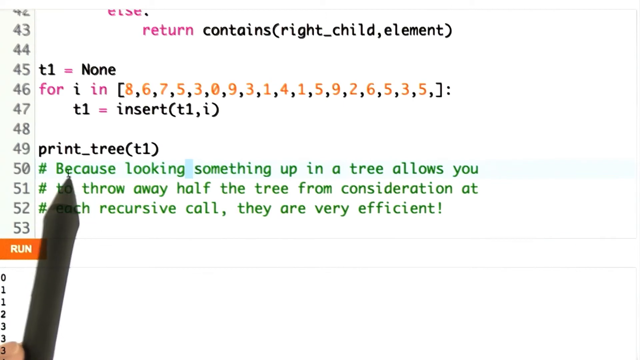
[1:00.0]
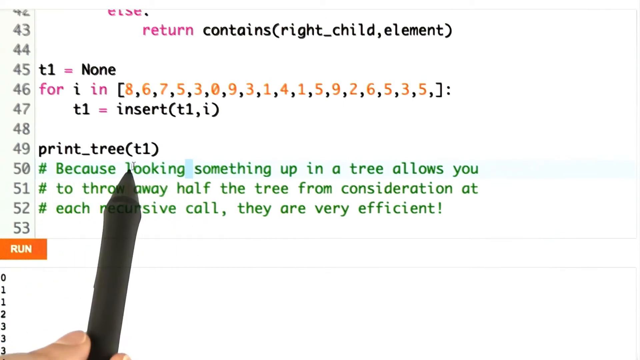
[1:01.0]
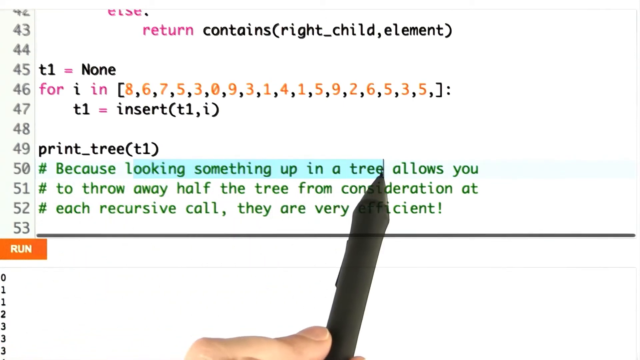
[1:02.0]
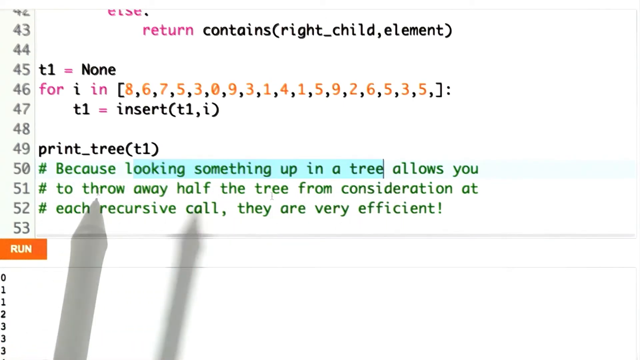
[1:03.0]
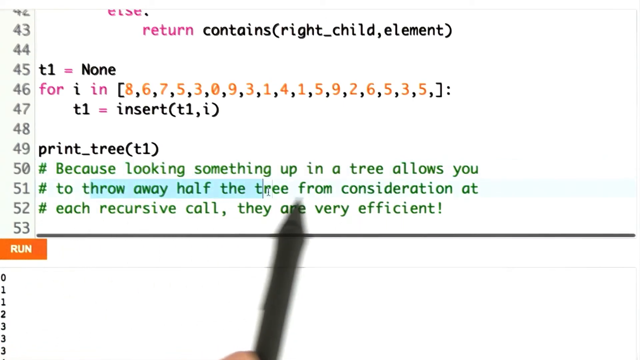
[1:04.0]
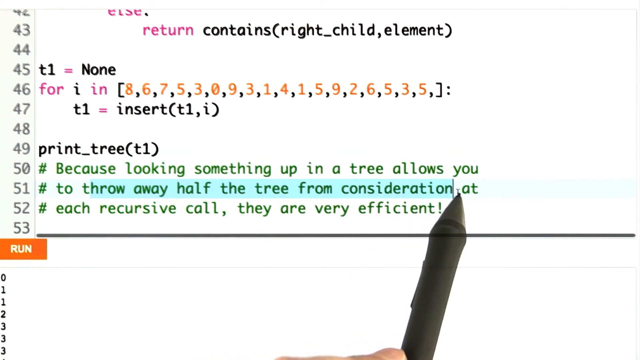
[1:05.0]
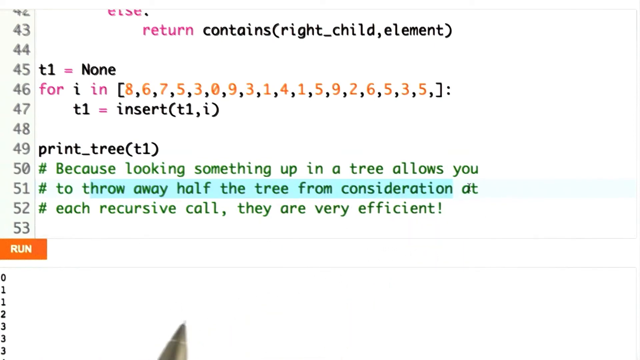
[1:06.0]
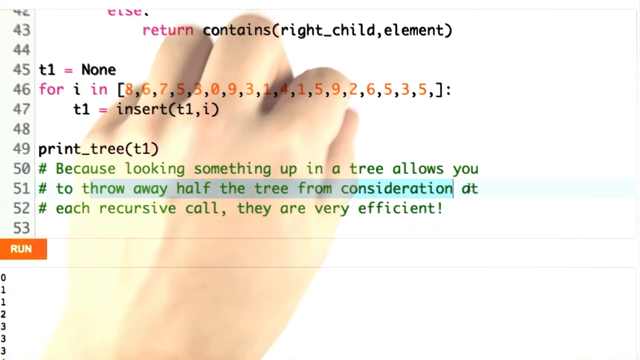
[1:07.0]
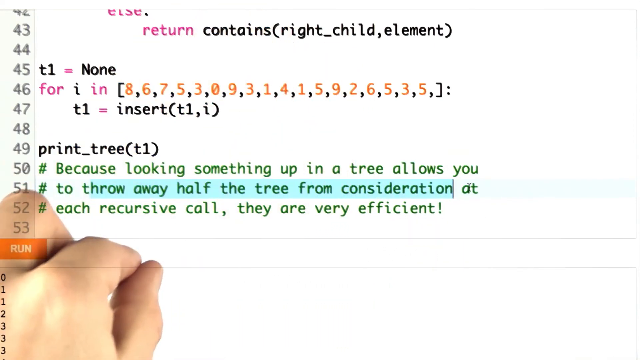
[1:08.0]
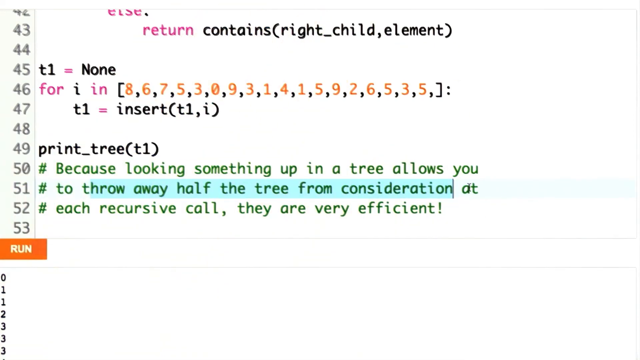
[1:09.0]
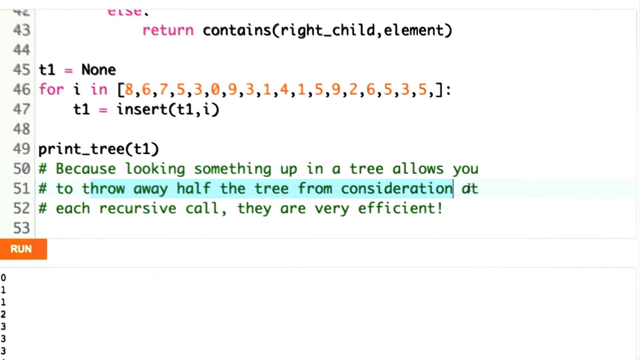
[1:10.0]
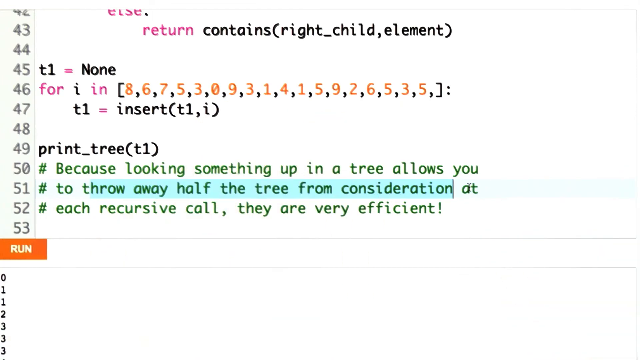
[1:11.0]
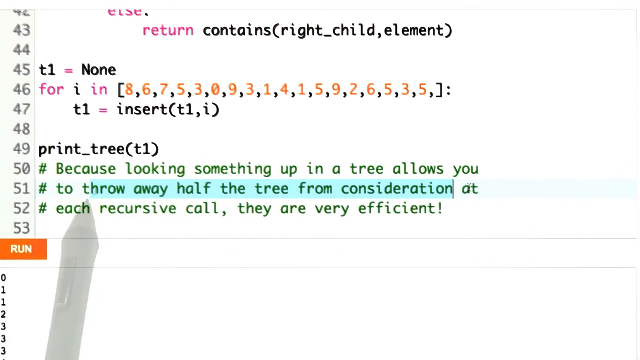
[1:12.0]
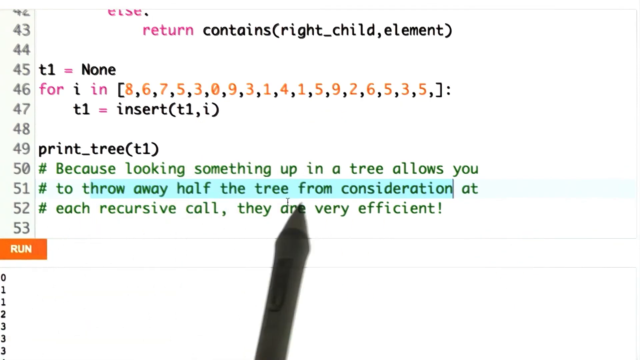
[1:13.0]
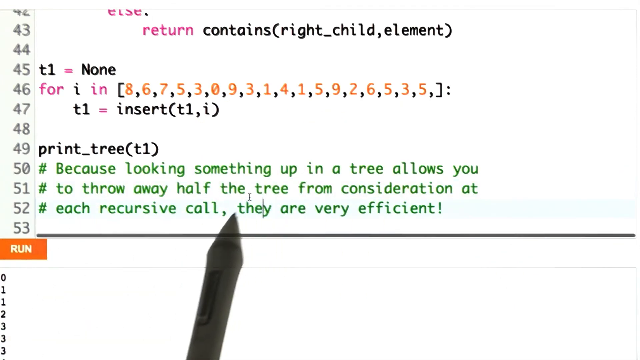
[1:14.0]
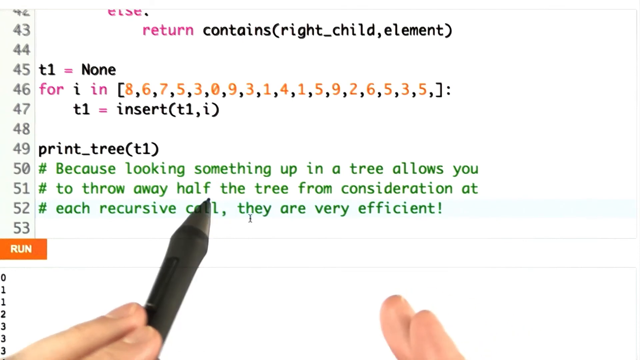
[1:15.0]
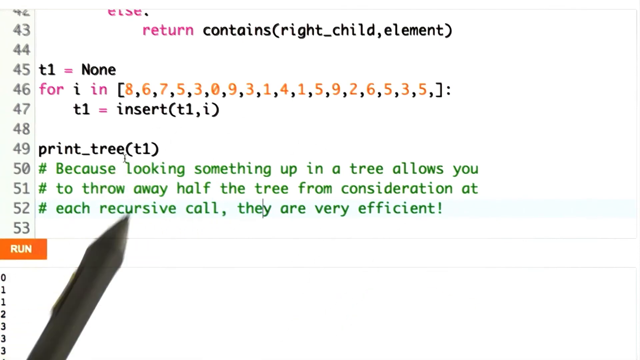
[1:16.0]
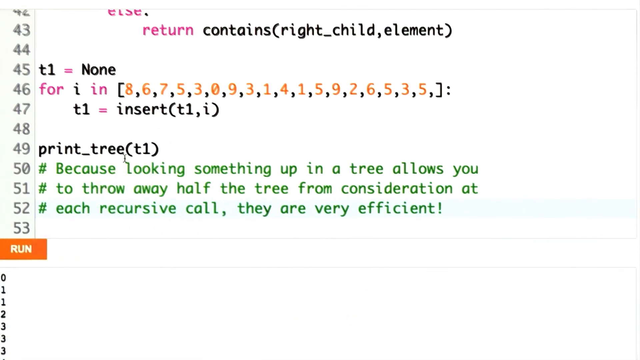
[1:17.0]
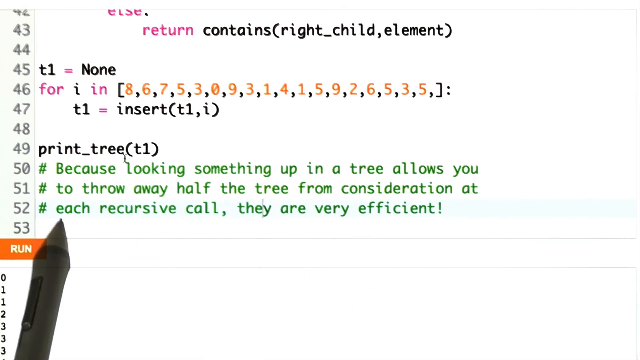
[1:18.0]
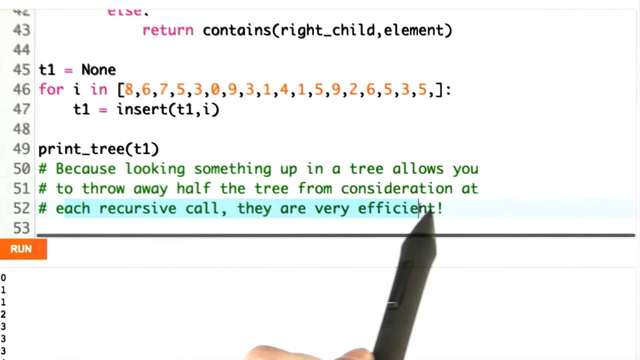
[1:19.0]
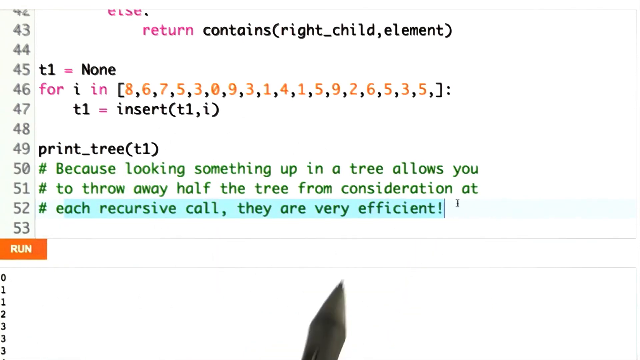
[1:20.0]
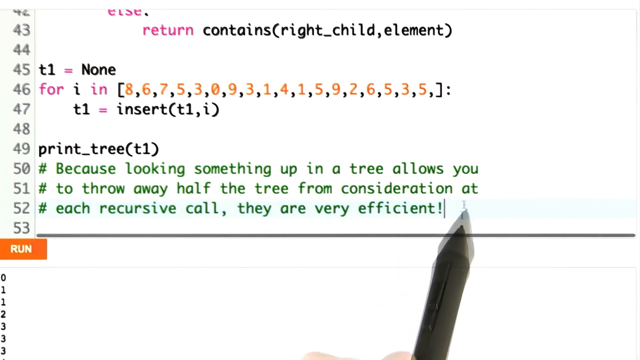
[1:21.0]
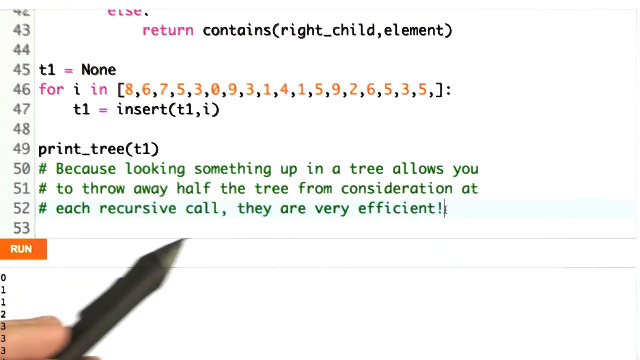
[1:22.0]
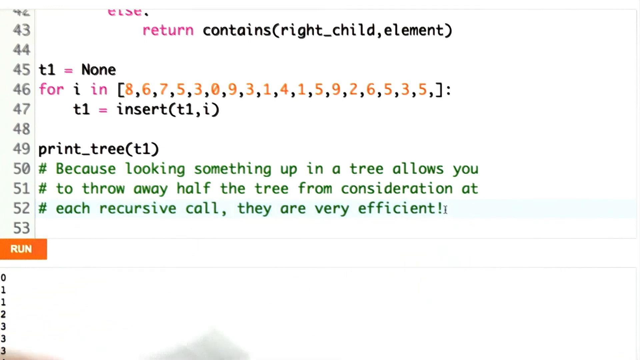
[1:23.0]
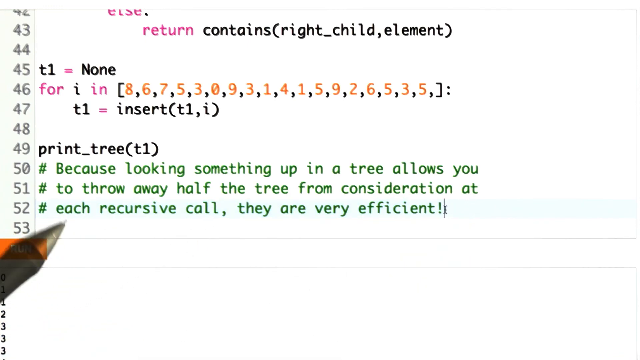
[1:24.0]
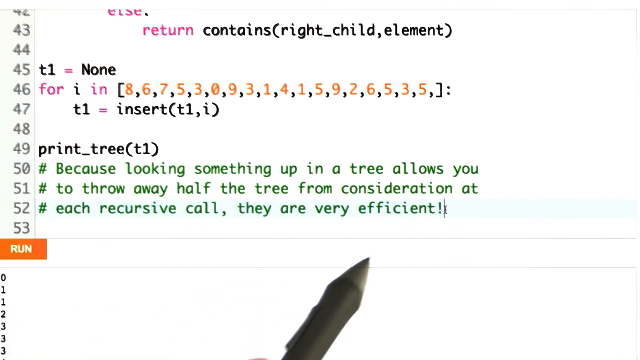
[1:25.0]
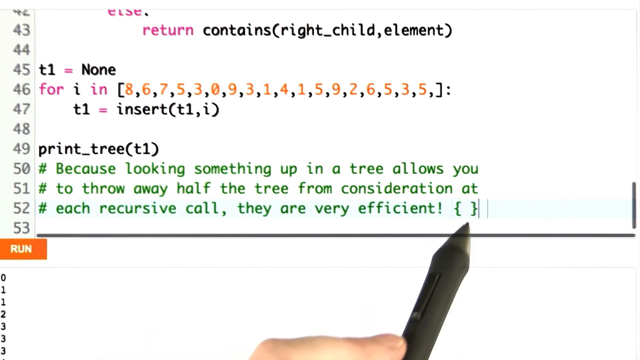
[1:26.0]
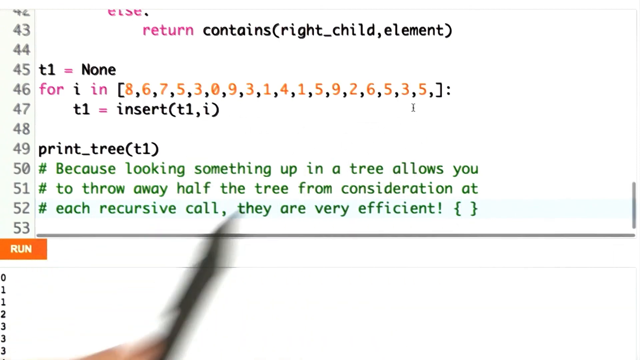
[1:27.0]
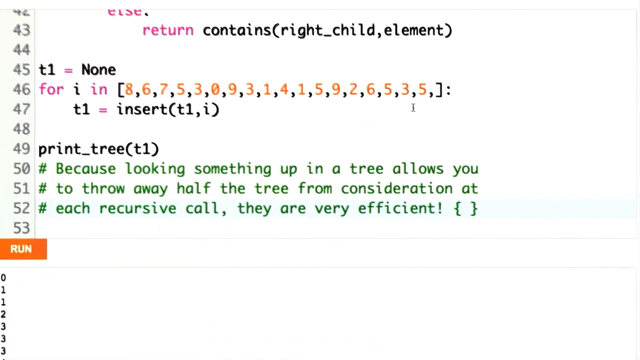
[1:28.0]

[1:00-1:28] The black pen is used to explain the green message, highlighting "looking something up in the tree" in the context of the tree algorithm. It then moves on to another message reading "throw away half the tree from consideration at each recursive call". The left hand shows up and gestures at how the data is used and passed into the recursive call. Both hands then appear, probably gesturing as if to say "voila, that's done". The black pen returns, probably emphasizing the logic and how efficient it is. On the left side of the screen are line numbers running from 43 to 53, with a run button just below line 53. Below the run button is a result area showing numbers output by the print tree function, starting with a small number and going up to bigger numbers.